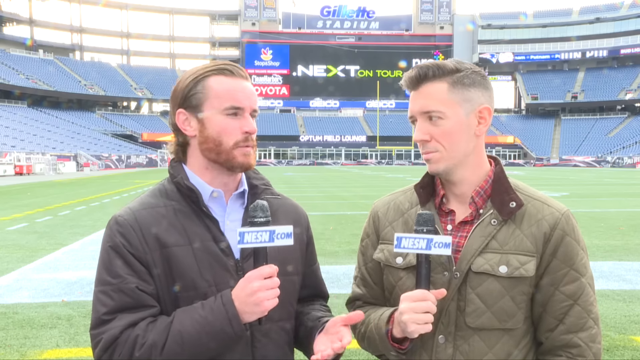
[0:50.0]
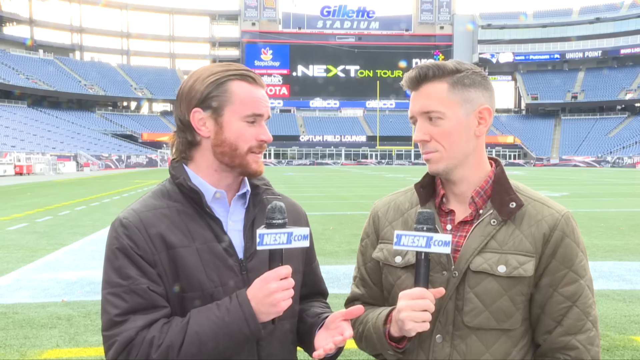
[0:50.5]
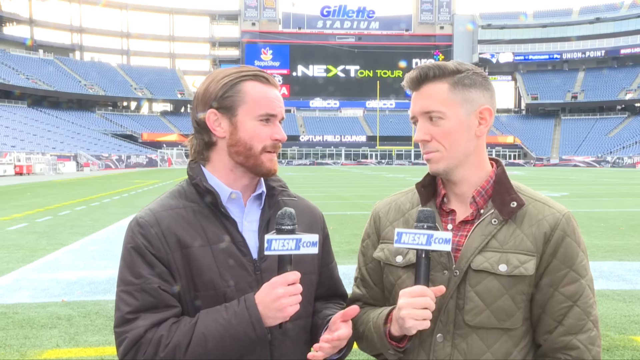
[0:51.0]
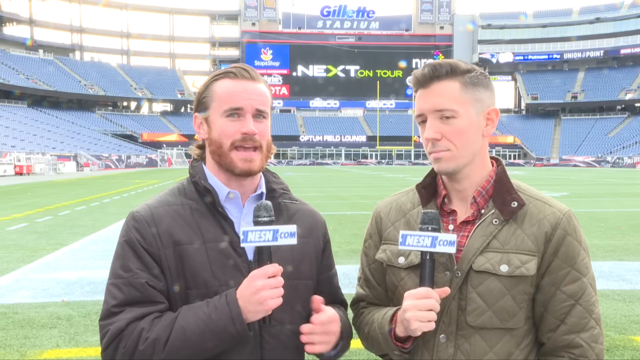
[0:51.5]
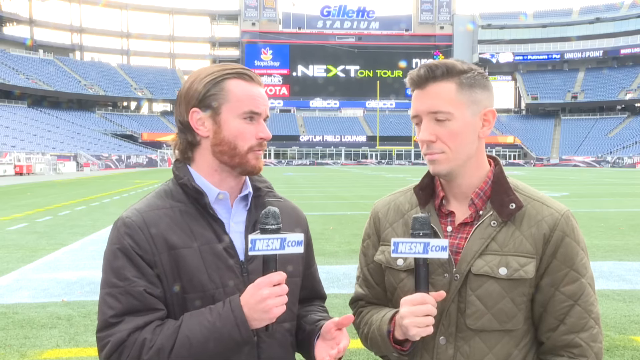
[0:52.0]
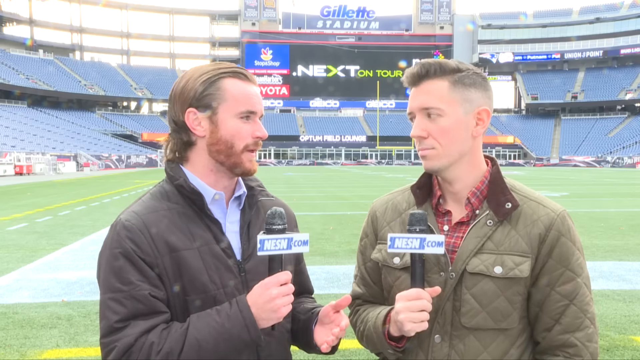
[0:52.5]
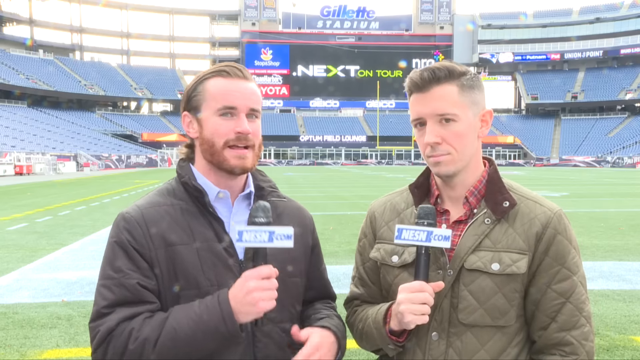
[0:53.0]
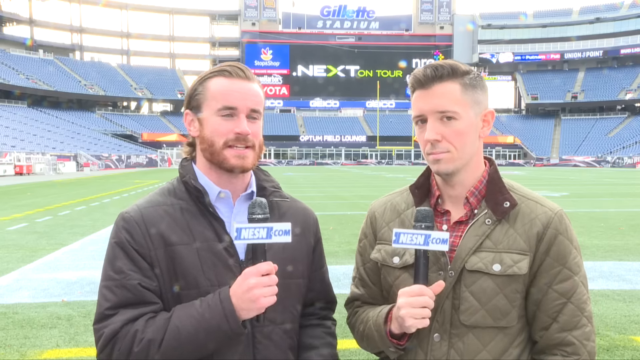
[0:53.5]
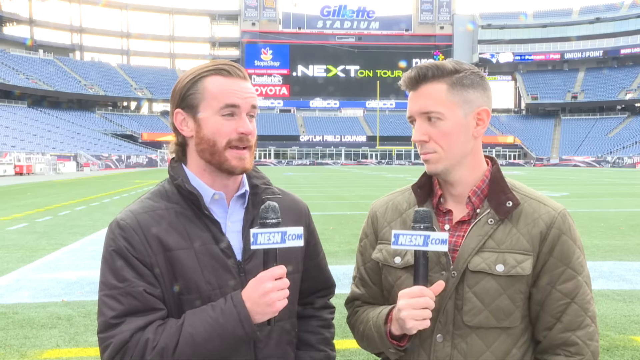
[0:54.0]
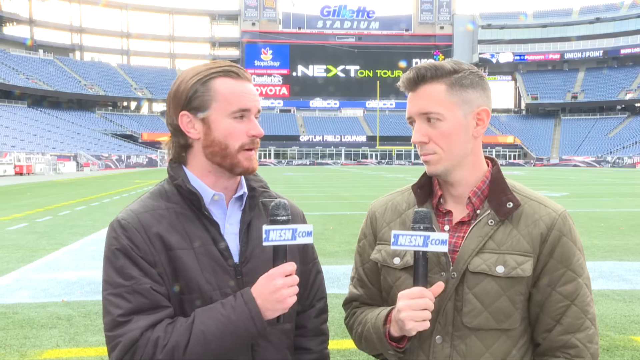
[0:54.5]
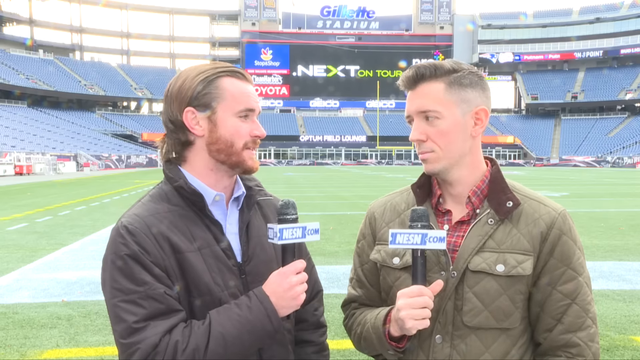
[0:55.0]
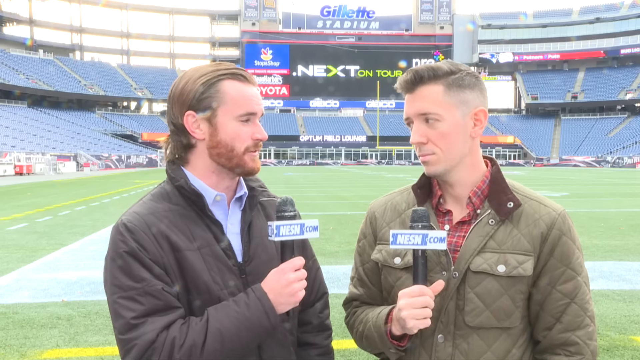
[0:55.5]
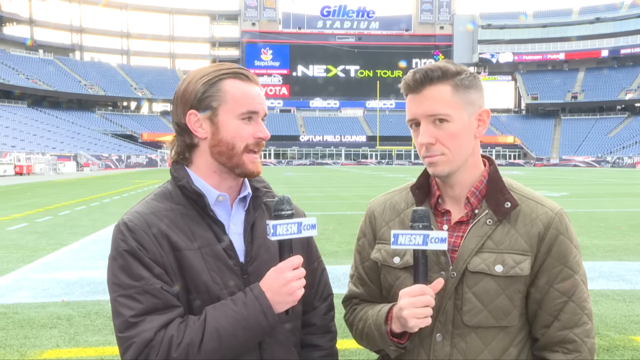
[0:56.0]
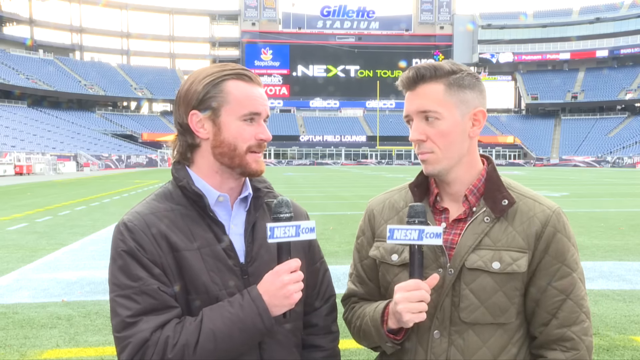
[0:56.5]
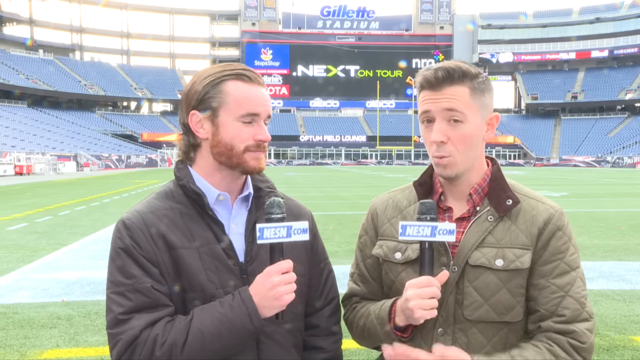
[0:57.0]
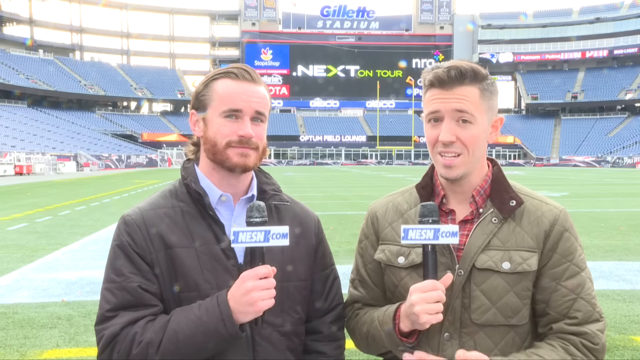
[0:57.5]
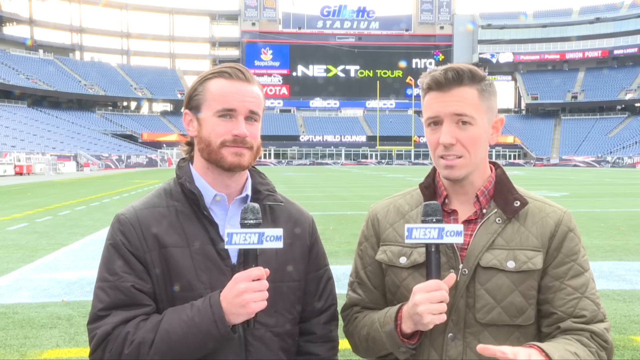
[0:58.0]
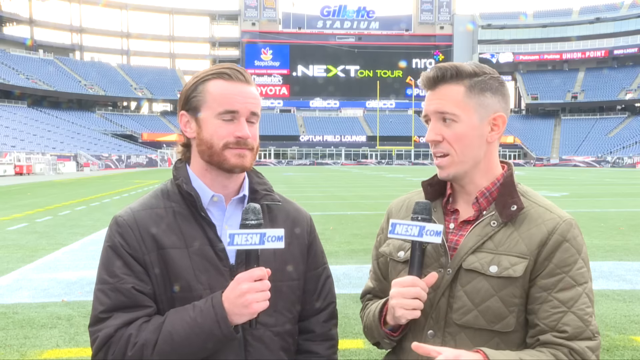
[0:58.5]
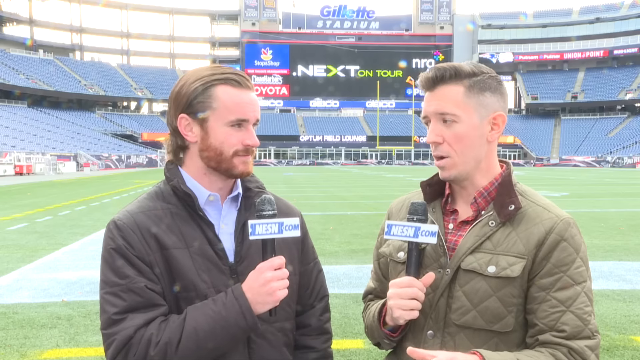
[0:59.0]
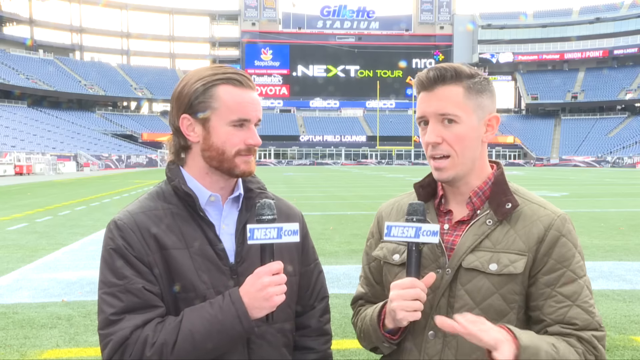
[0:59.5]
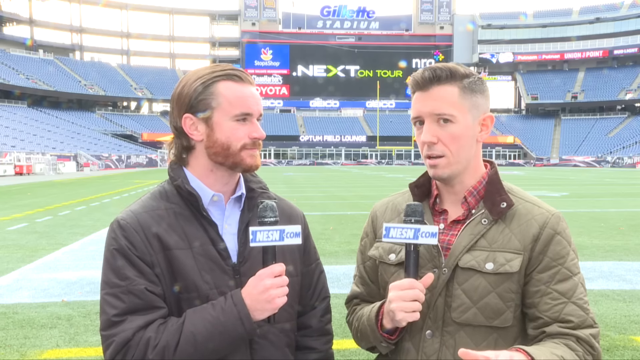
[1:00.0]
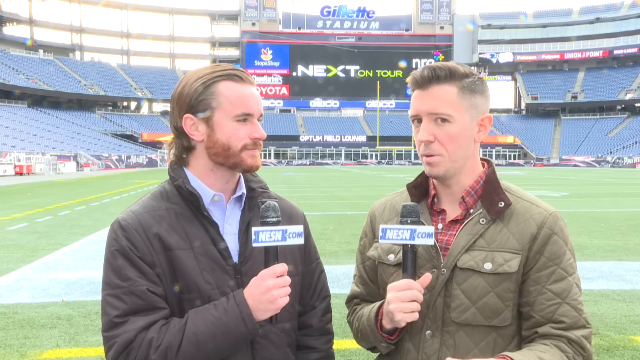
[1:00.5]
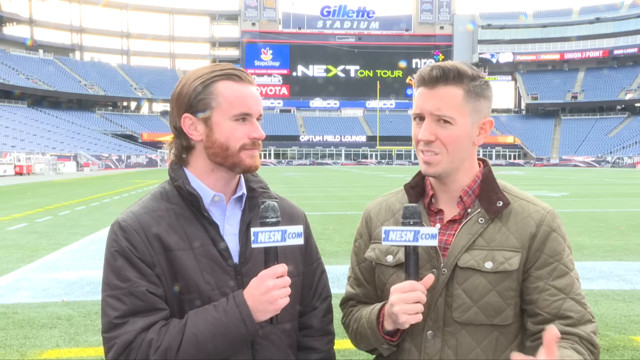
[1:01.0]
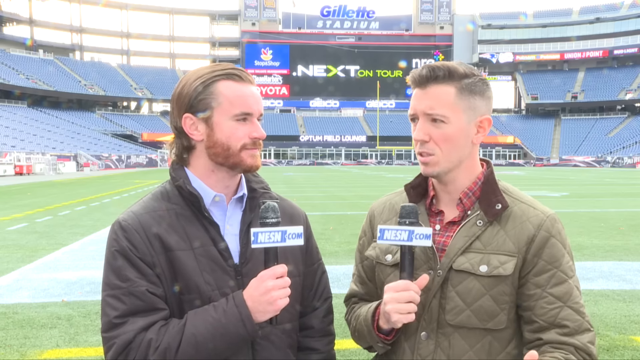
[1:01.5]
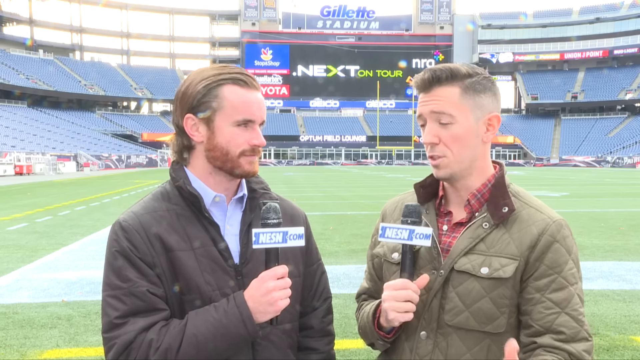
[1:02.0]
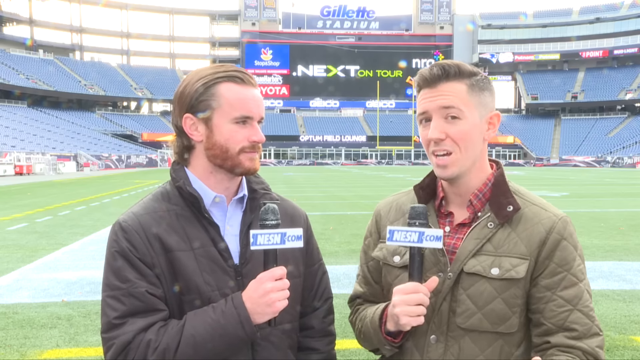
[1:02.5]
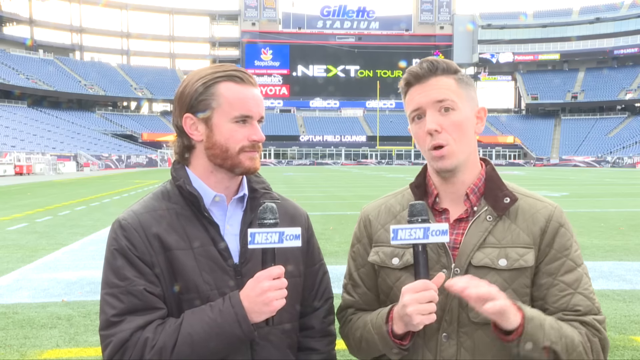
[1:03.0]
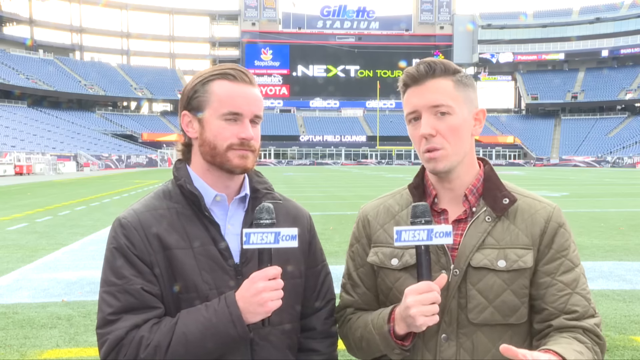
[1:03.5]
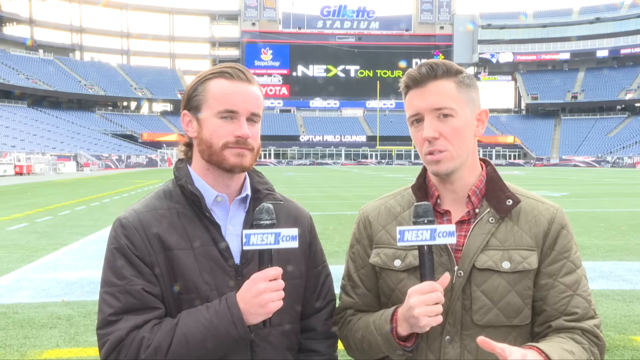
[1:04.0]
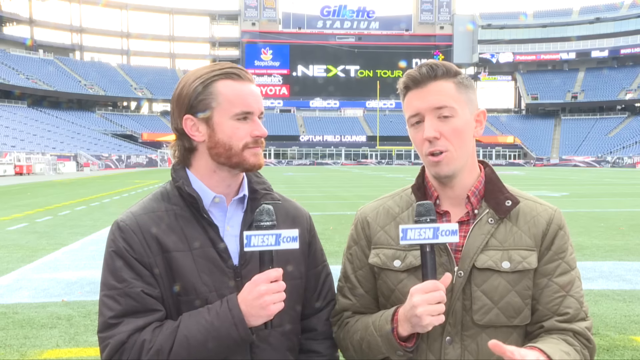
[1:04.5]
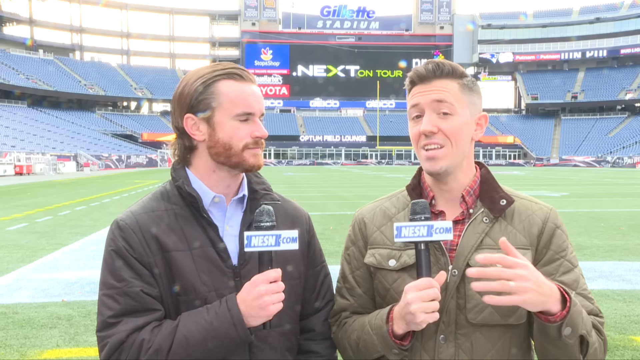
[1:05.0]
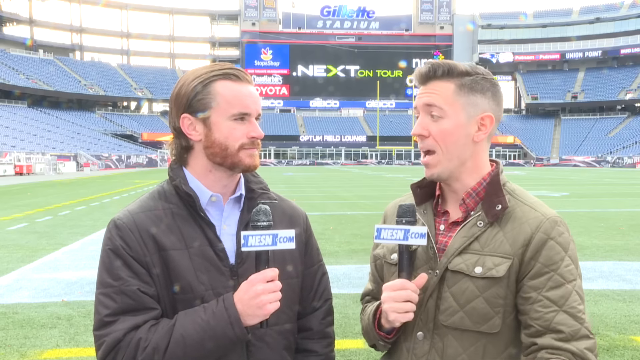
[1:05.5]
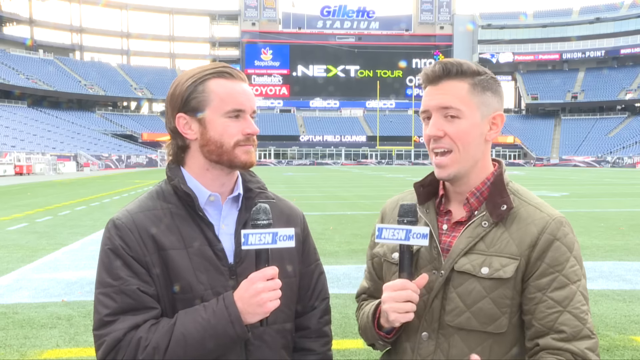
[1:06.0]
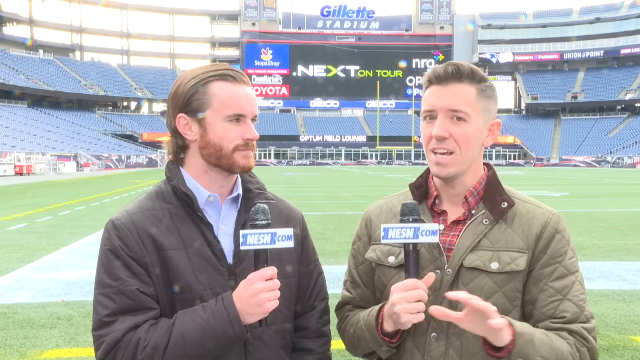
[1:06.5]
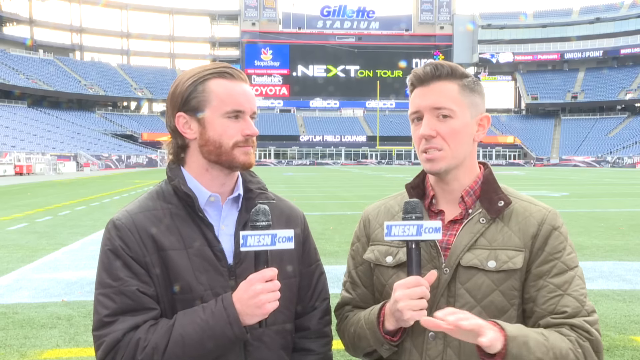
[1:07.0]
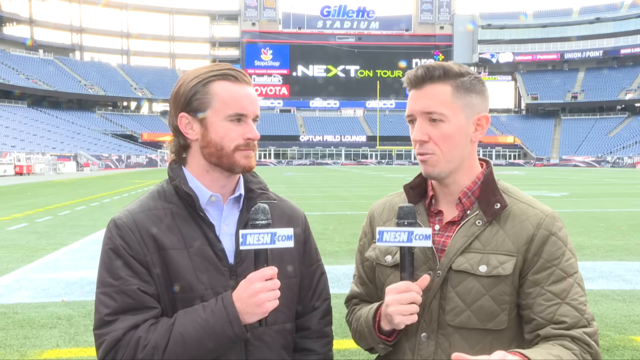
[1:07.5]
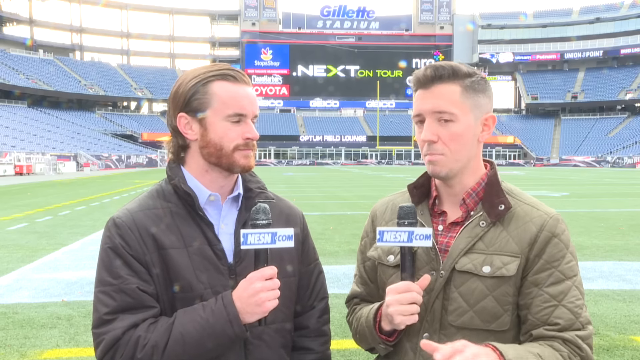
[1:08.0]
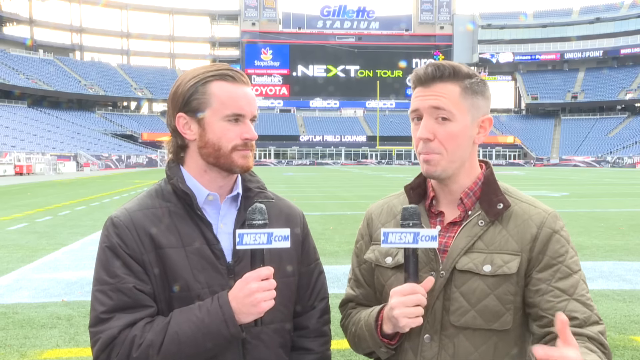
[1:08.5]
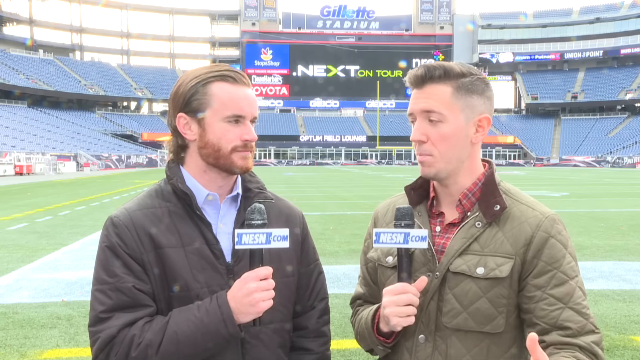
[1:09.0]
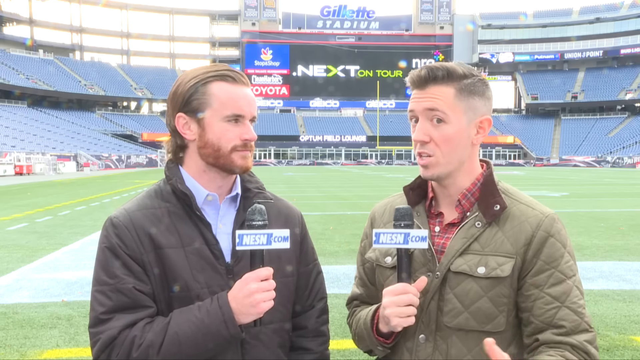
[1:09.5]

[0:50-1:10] Two sportscasters who work for NESN.com, shown on a box around each of their microphones, take turns talking and gesture with their hands. They hold the mics in front of them in their right hands and stand in front of the football field at Gillette Stadium. A picture of some football players flashes briefly and disappears. A Toyota advertisement sign is next to a large black screen that reads "Next on tour." A sign behind the men, between them, says something about "Optum Field," but it is not very legible. The seats are all empty and nobody is on the field. A flagpole with no flag stands between the two men. It looks like a bright day, with some sunlight coming through windows in the stadium.